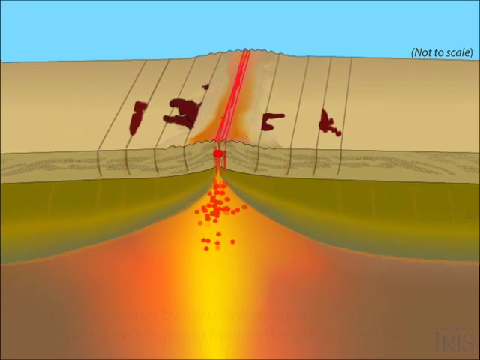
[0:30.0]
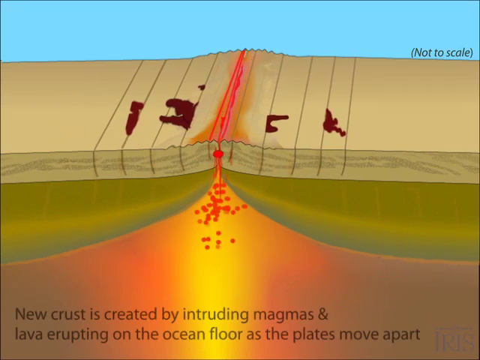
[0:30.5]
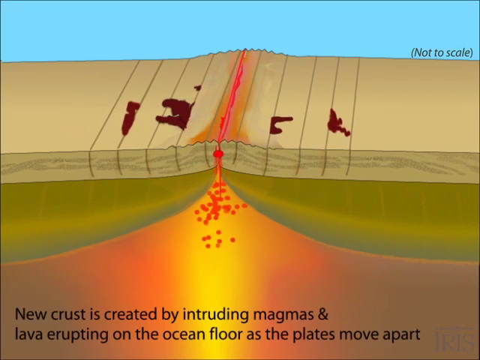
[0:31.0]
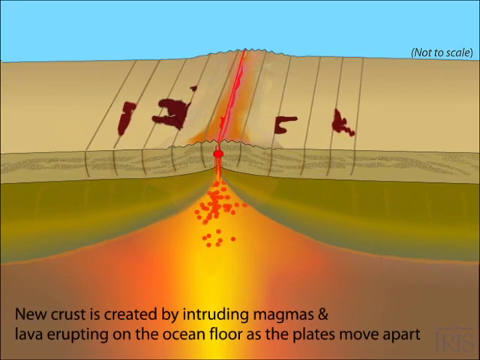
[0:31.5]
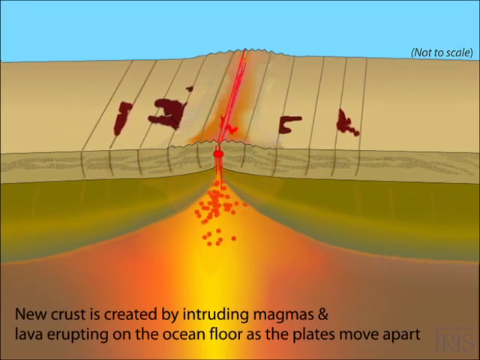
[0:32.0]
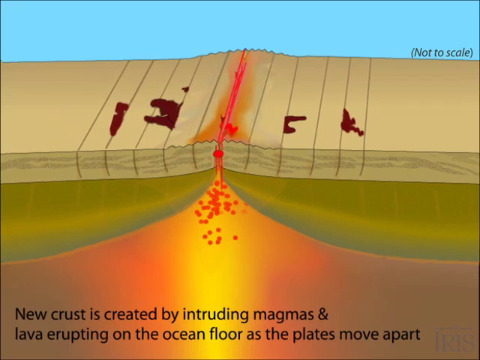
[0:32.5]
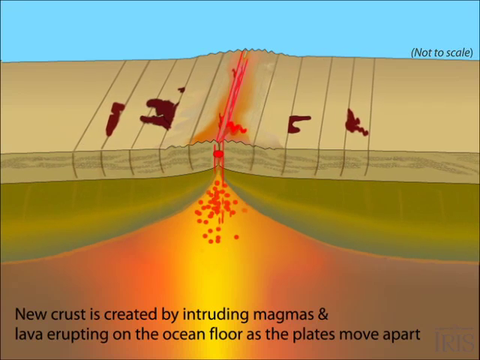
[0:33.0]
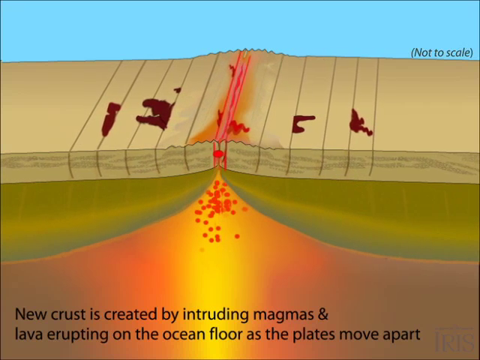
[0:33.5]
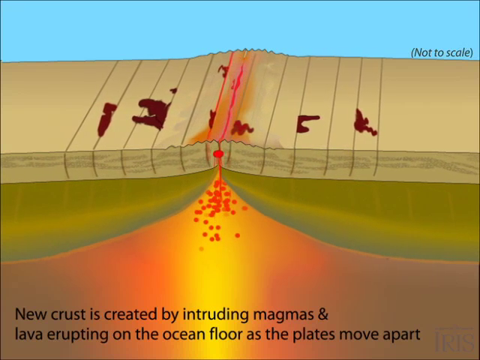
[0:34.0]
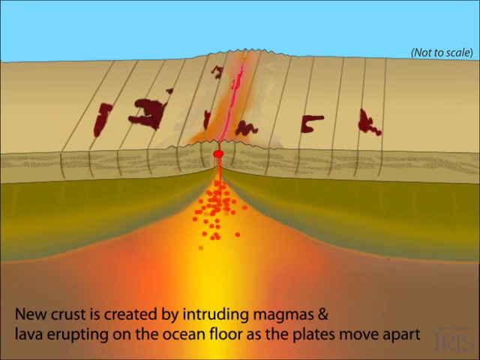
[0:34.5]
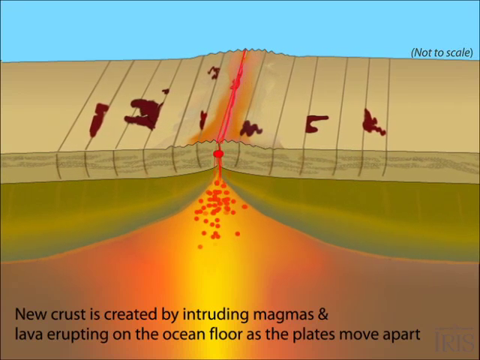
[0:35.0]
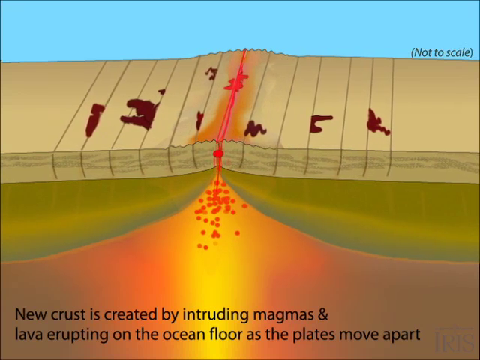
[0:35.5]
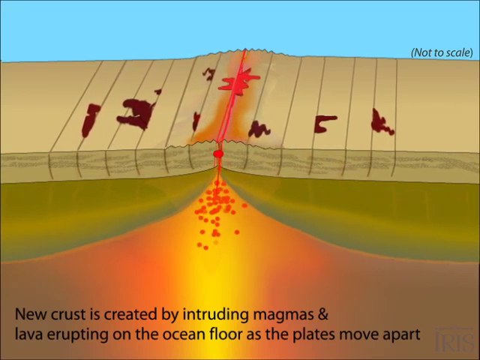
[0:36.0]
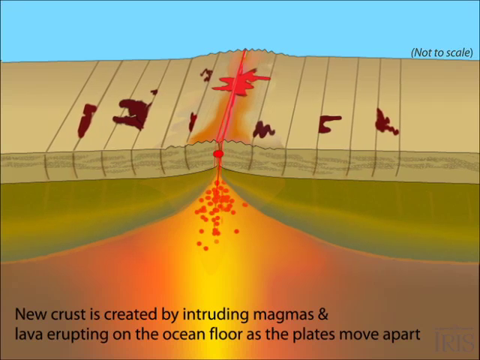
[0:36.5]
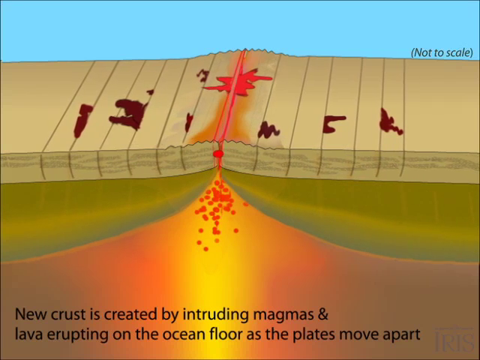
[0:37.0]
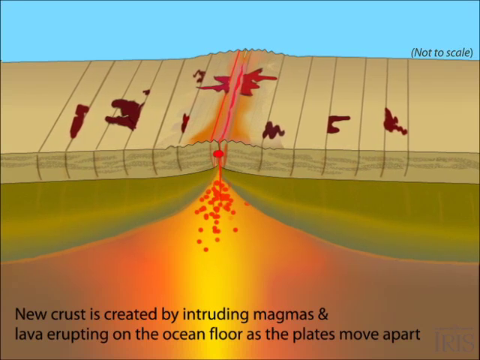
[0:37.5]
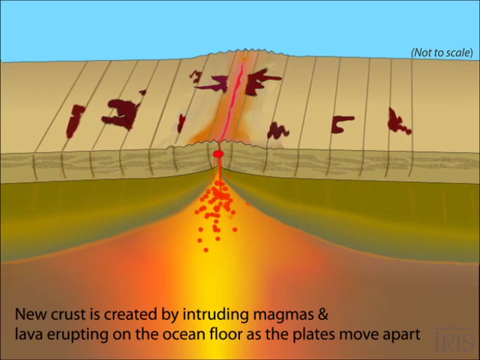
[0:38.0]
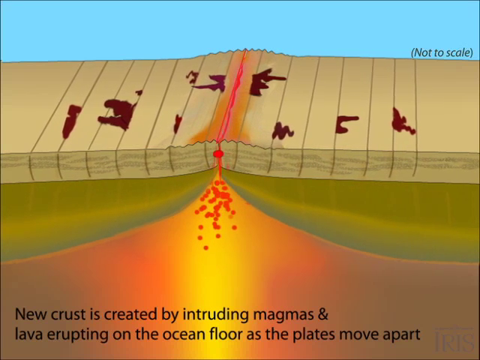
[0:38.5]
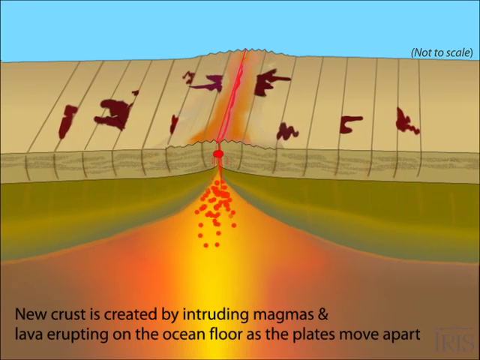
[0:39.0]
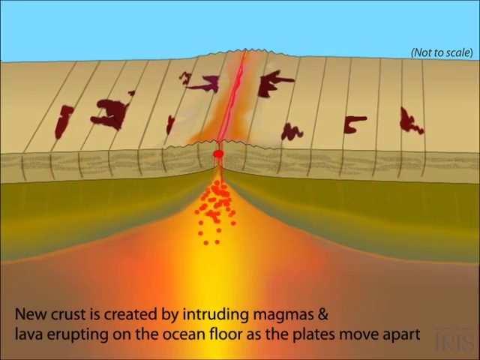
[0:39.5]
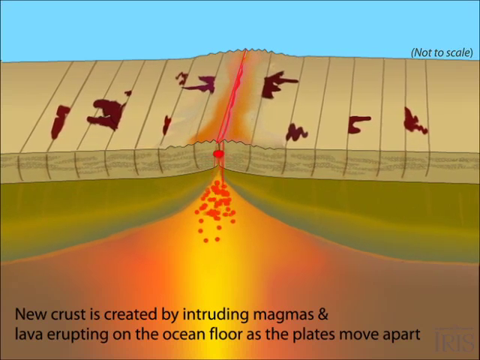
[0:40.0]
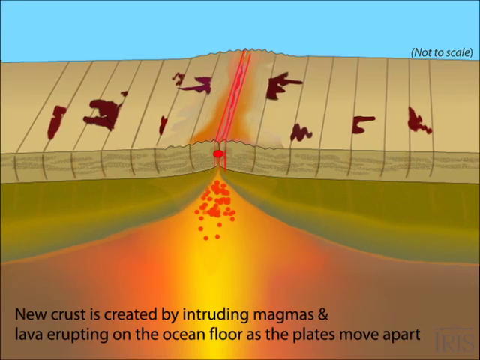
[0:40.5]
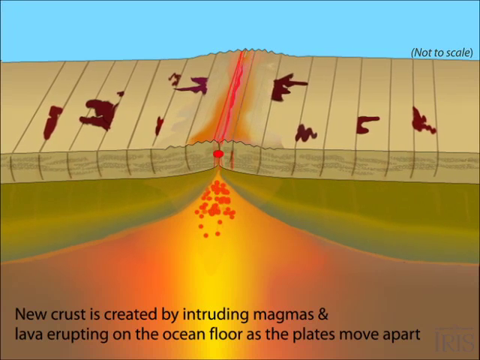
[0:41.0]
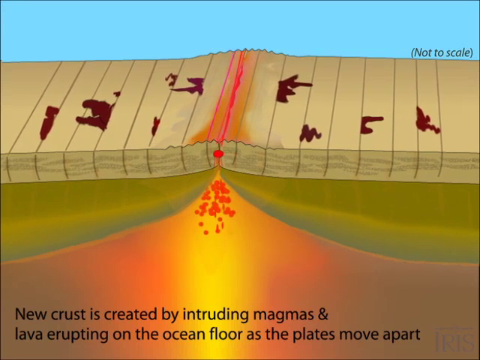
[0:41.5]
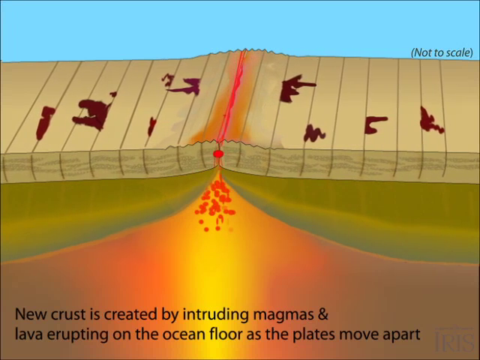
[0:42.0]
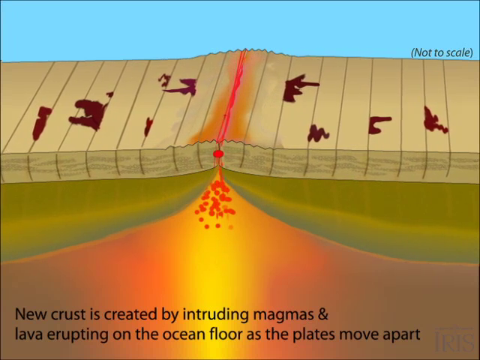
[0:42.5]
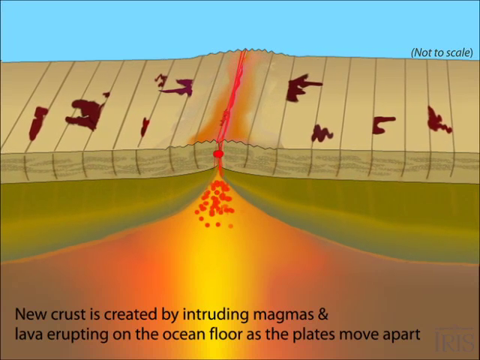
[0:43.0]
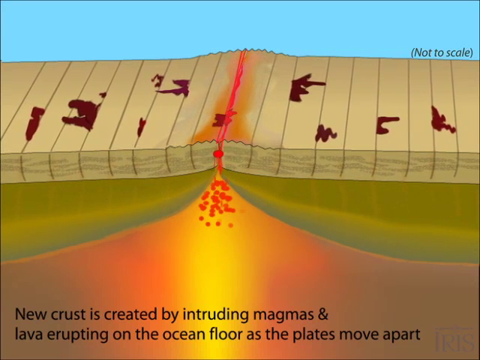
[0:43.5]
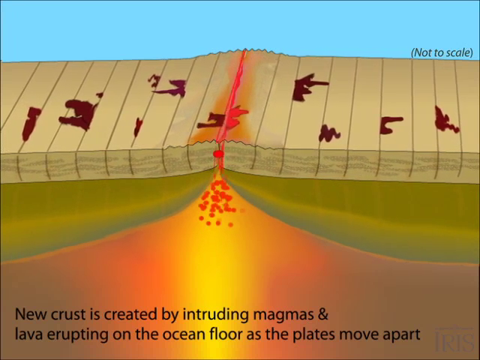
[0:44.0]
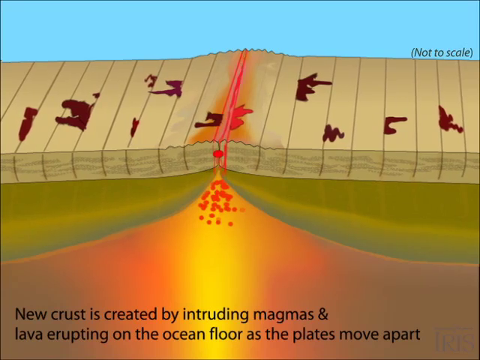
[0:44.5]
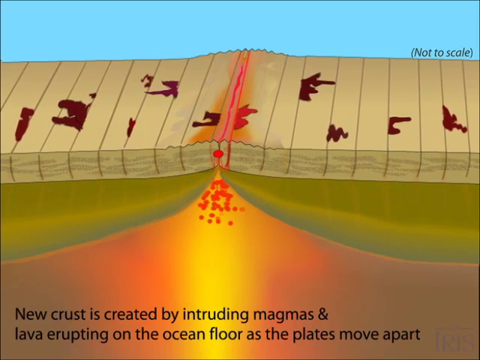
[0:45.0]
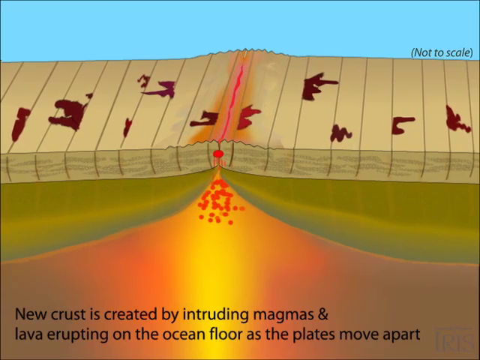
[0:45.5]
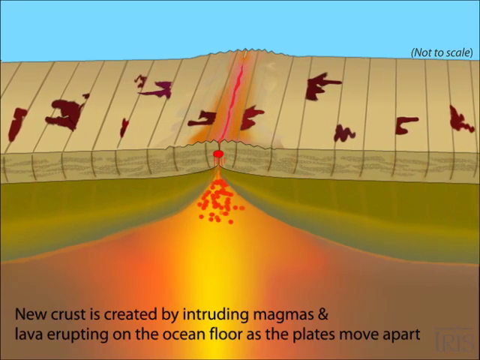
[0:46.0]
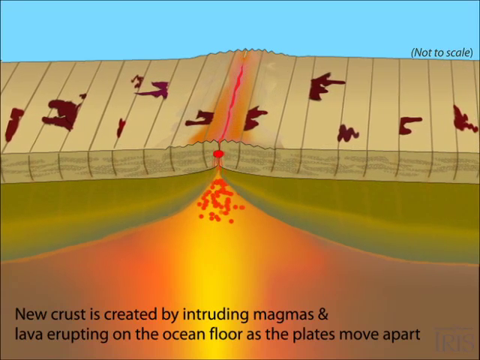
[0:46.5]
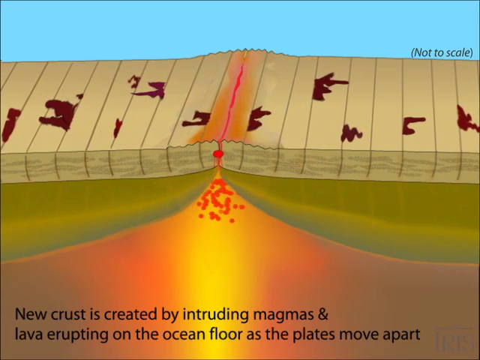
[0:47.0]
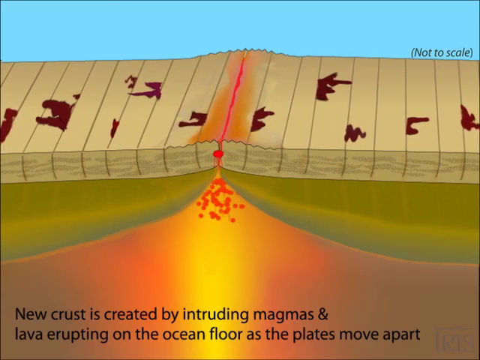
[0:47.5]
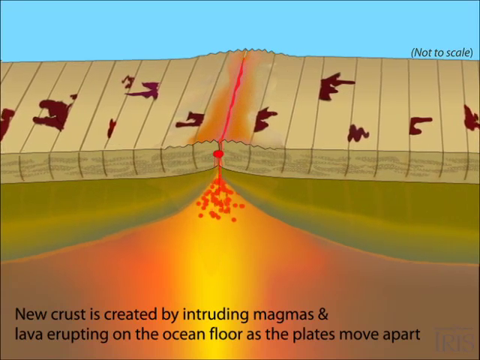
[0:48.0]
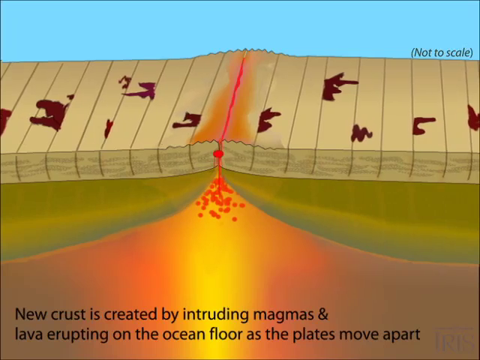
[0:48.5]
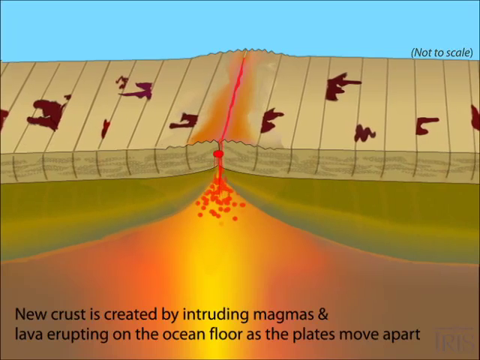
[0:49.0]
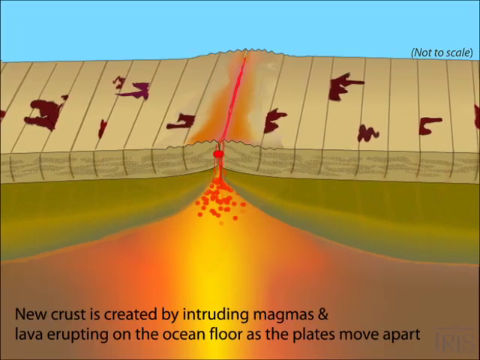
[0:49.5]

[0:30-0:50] A graphic depicts the formation of a mid-ocean ridge. The ocean floor is shown with what looks like a ridge beginning to form, depicted as a red line with vertical lines moving out from it. Below it, the layers appear to rise up to a point beneath the ridge, and little red dots that look like magma bubble below the red line. Text at the bottom of the screen reads "New crust is created by introducing magmas and lava erupting on the ocean floor as the plates move apart." The lines continue to illustrate the plates moving farther and farther apart while the red line is maintained in the center. Around each vertical line a brown or red blob periodically appears. The layers of the crust are in shades of green, orange, and tan.